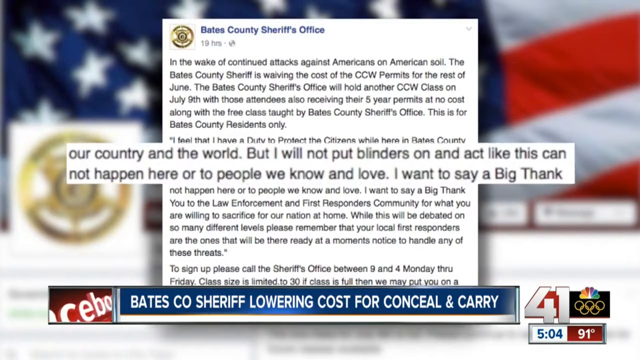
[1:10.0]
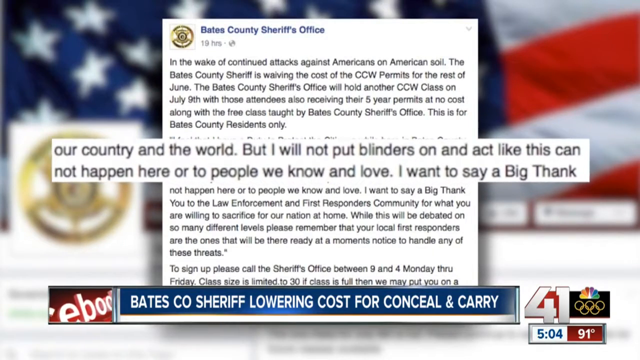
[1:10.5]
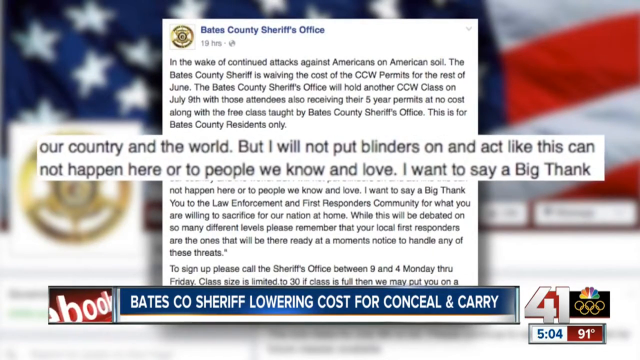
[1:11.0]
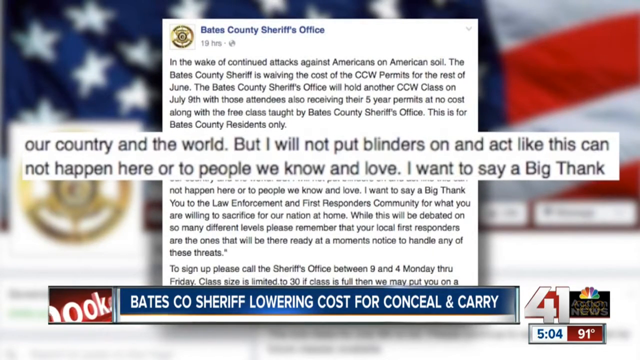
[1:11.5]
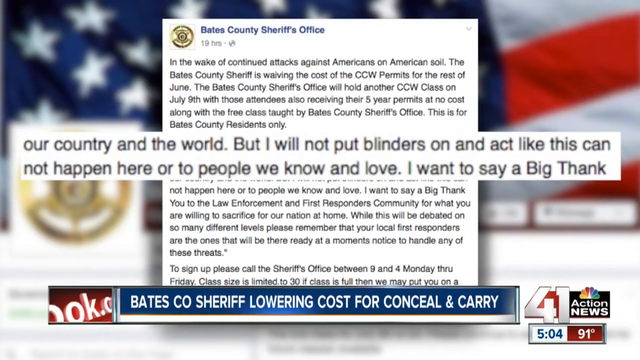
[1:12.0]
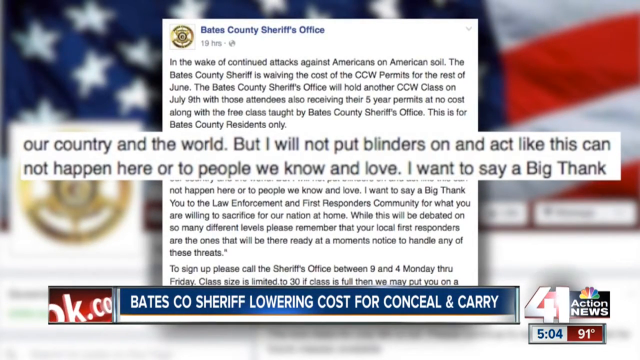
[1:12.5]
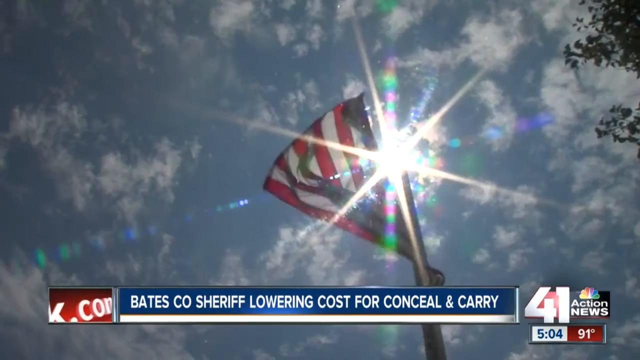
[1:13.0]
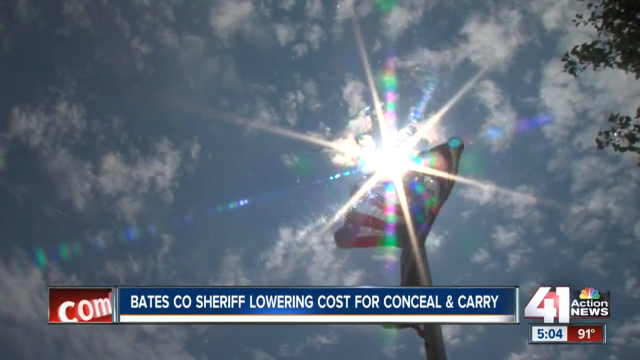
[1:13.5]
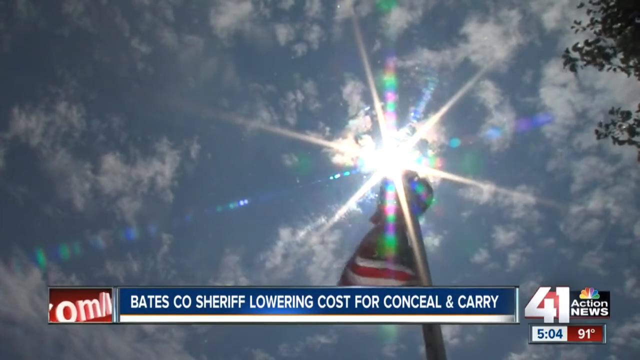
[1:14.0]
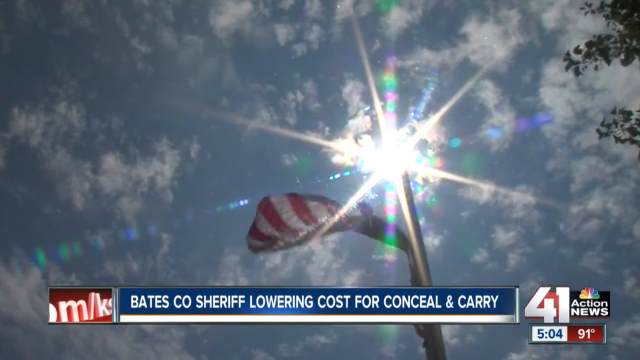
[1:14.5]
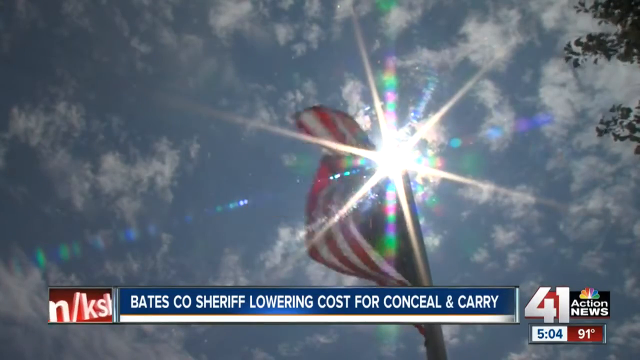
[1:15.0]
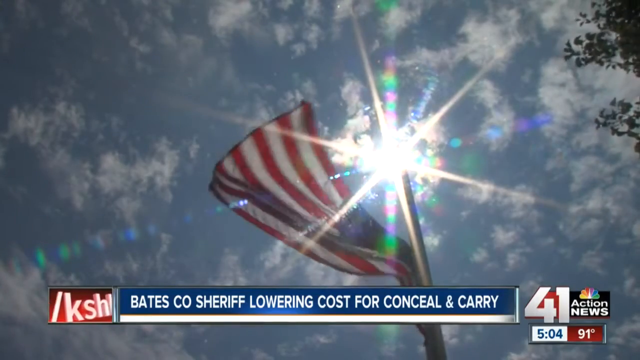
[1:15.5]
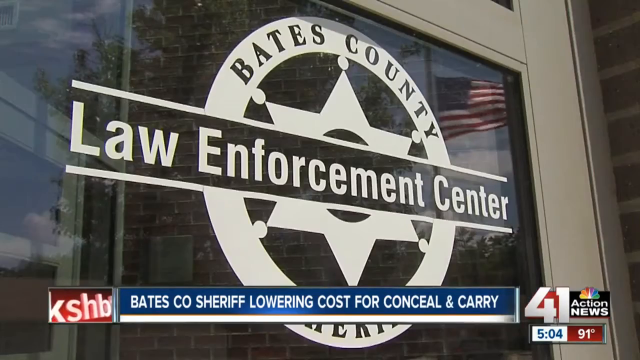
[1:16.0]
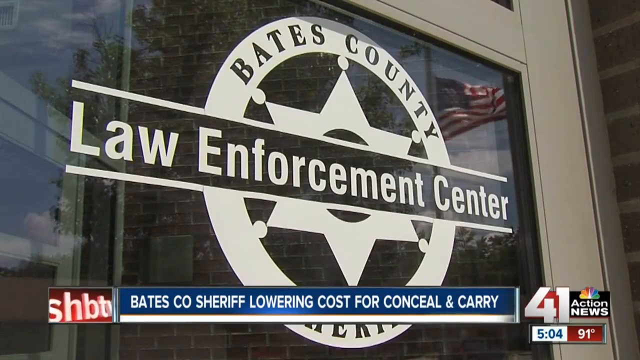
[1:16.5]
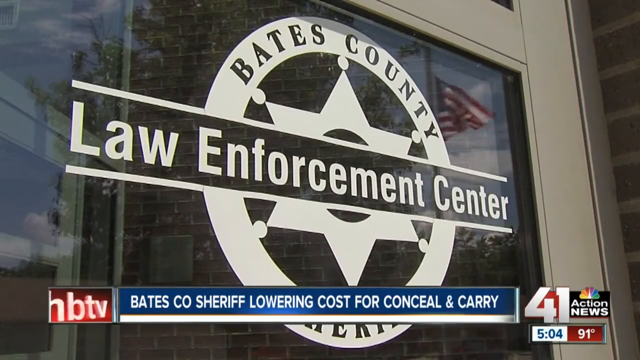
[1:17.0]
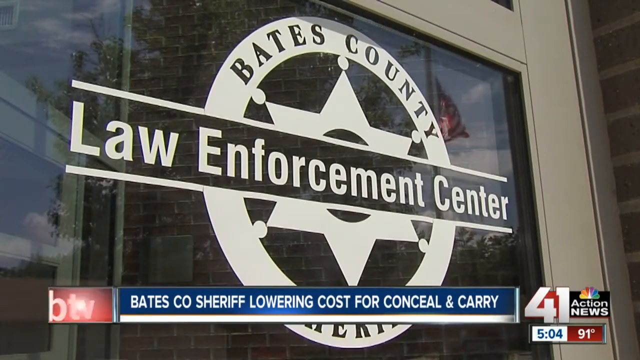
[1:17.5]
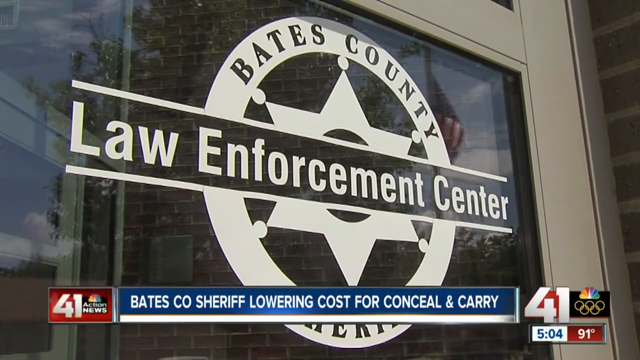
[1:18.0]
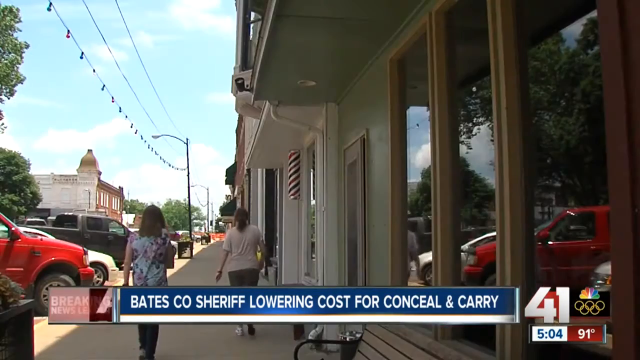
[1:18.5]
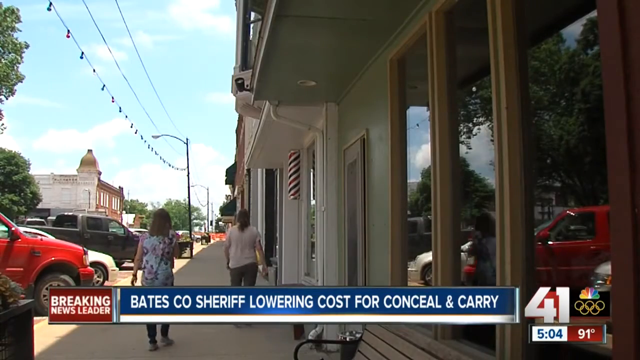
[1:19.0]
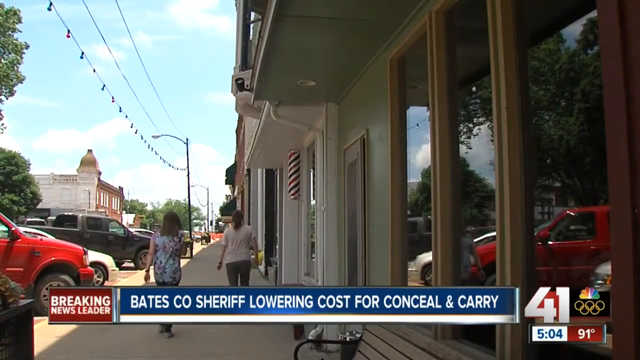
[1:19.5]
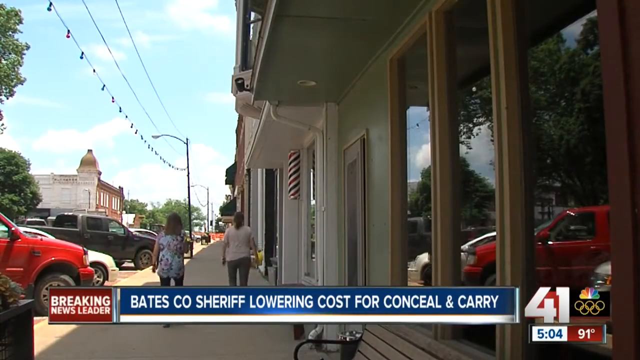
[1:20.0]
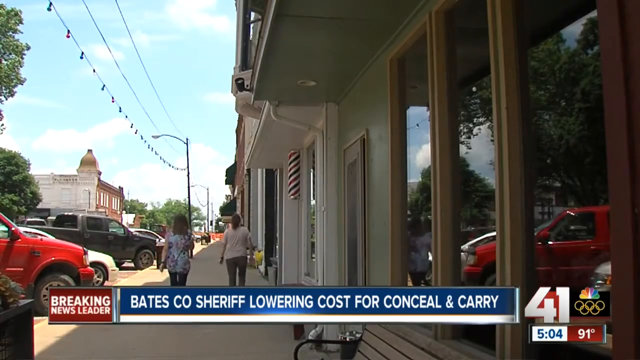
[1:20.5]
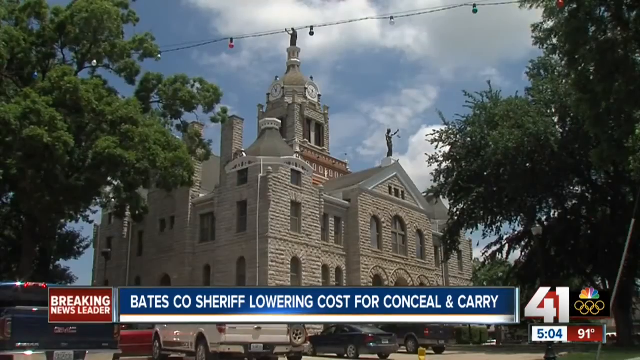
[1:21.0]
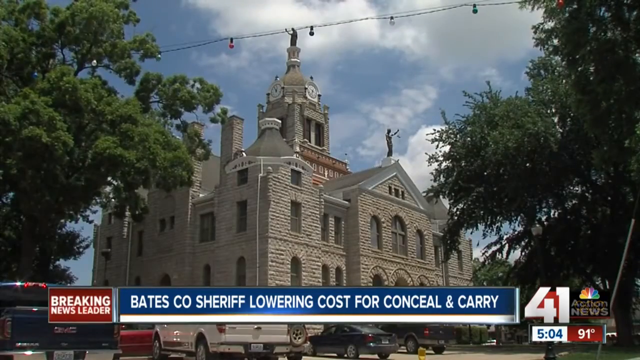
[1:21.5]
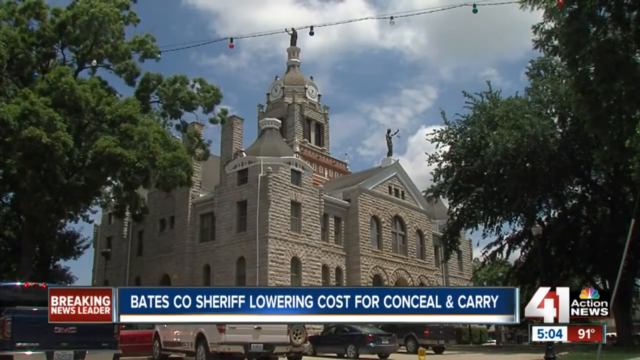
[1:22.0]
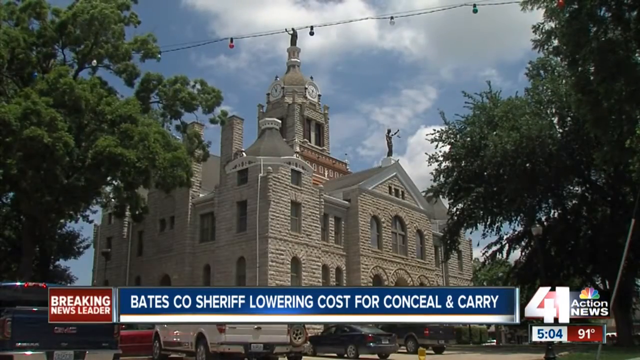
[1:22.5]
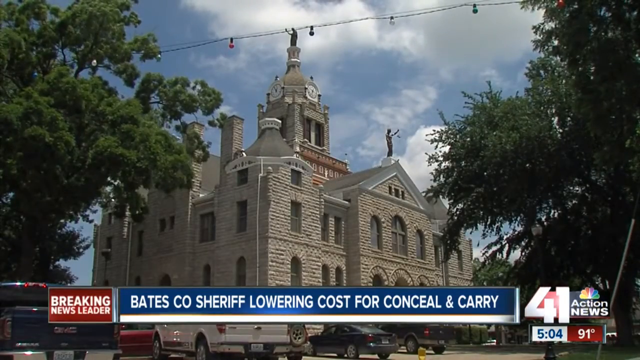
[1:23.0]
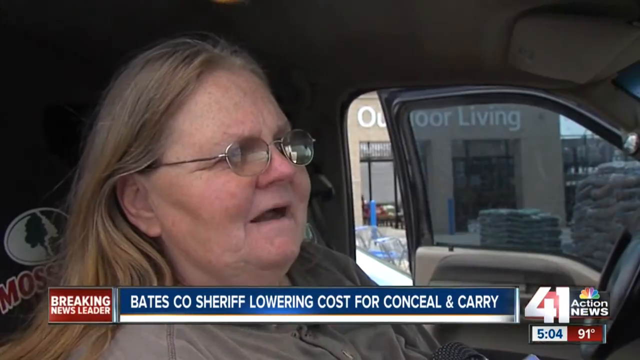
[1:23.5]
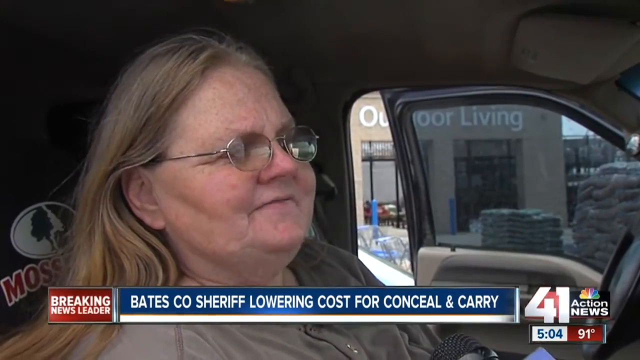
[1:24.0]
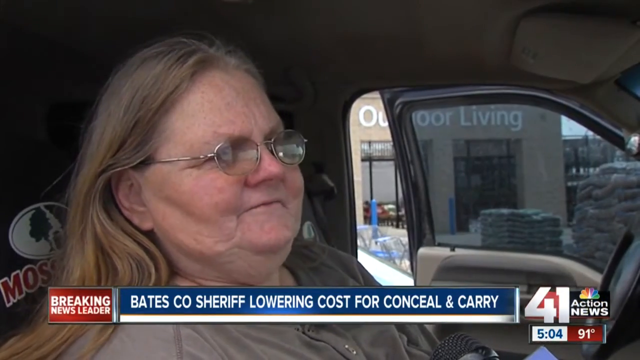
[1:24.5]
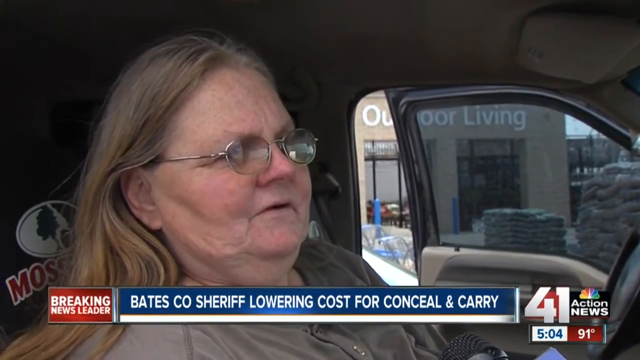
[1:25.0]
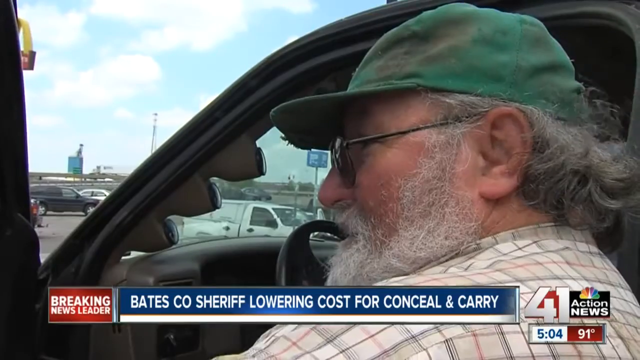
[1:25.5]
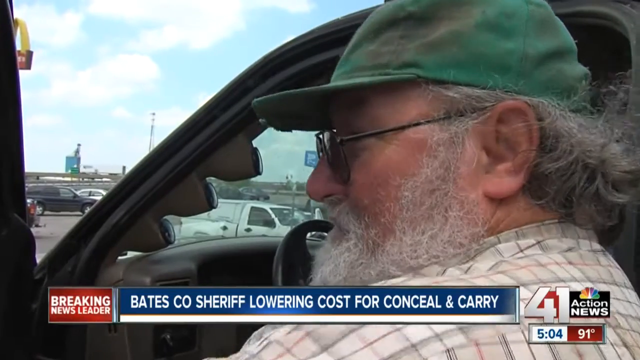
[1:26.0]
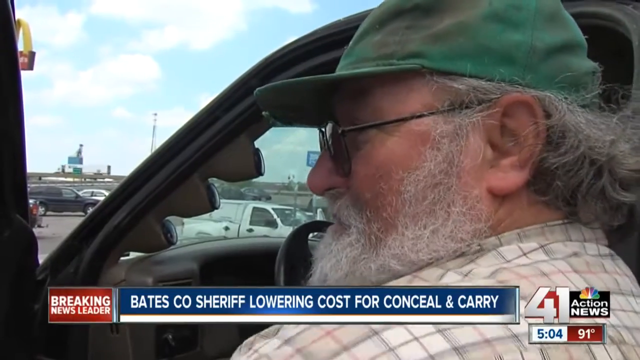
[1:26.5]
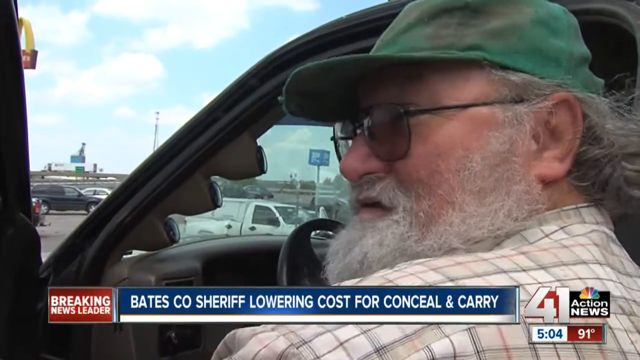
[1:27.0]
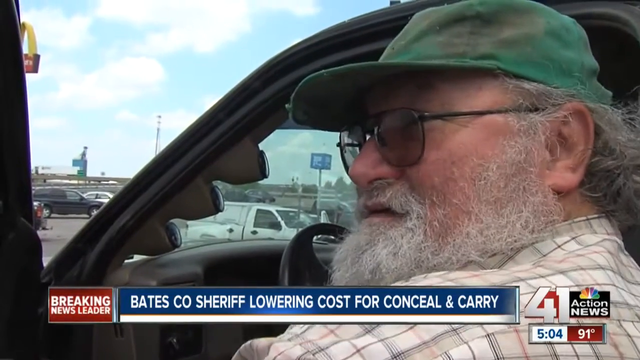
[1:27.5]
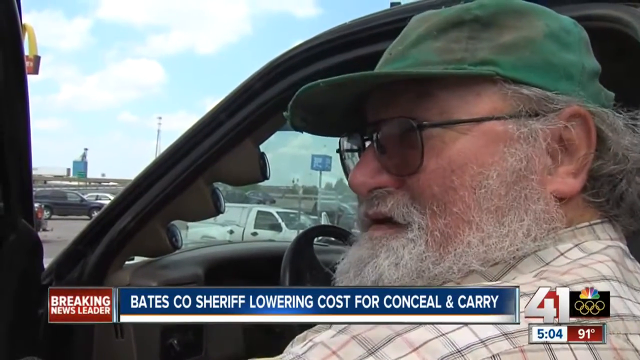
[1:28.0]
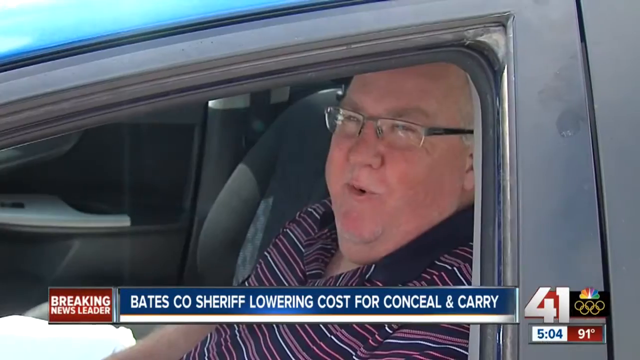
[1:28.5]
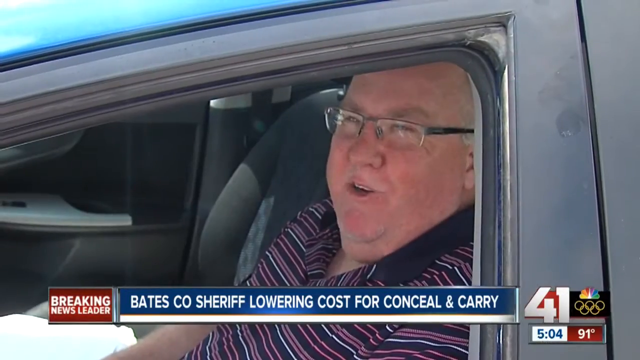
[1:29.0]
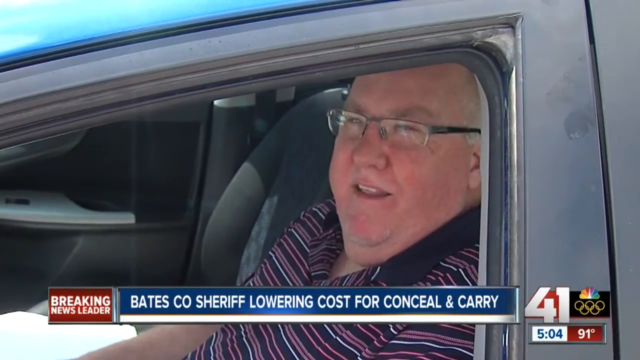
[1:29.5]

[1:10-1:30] A statement is on the screen under "Bates County Sheriff's Office," and two lines of the statement are highlighted: "our country in the world but I will not put blinders on and act like this cannot happen here or to people we know and love I want to say a big thank." The view zooms in on that quote. In an exterior shot, the American flag flies with the sun shining around it. Another exterior shot shows "Bates County law enforcement" with a large police badge logo. People walk through a downtown, including two people who appear to be women walking away from the camera. Next is the exterior of a large, very tall old building with what appear to be statues on top. The video cuts to a woman with shoulder-length hair and glasses, sitting in a vehicle as she speaks. Then a man with a green hat and a long gray beard is just outside the driver's door of his truck, followed by a man in glasses and a striped shirt speaking from the driver's side of his car.